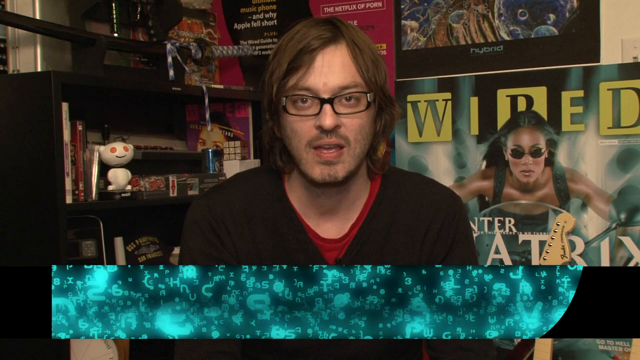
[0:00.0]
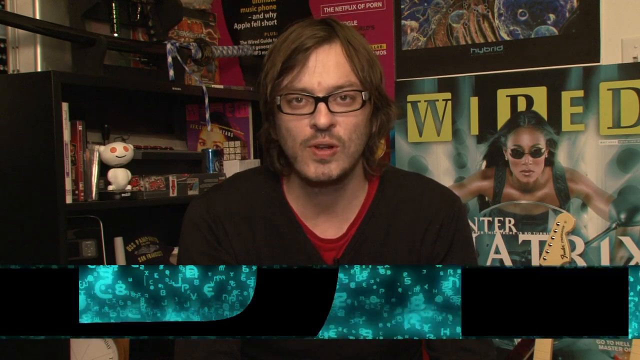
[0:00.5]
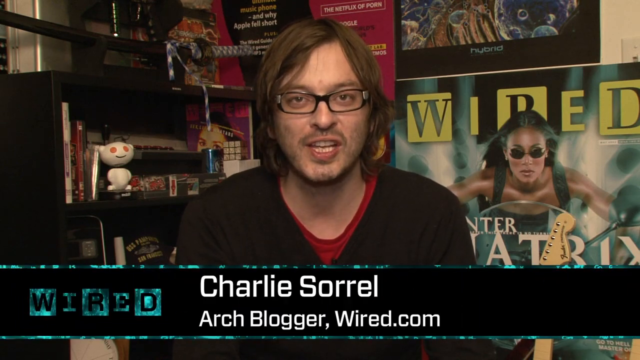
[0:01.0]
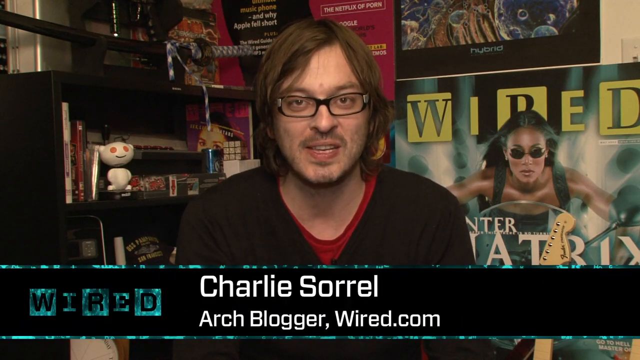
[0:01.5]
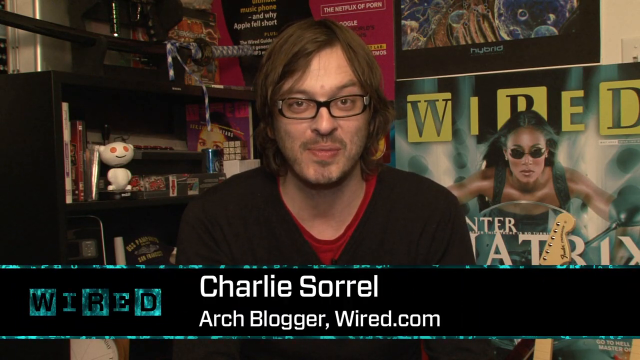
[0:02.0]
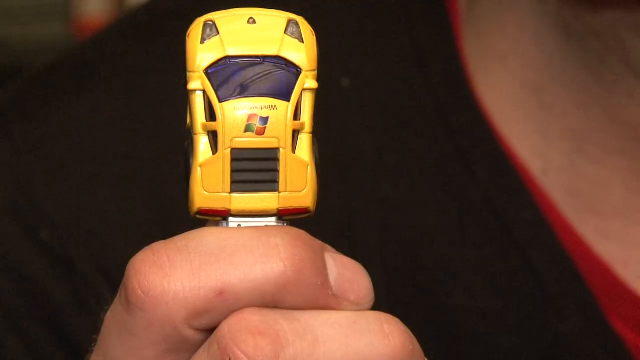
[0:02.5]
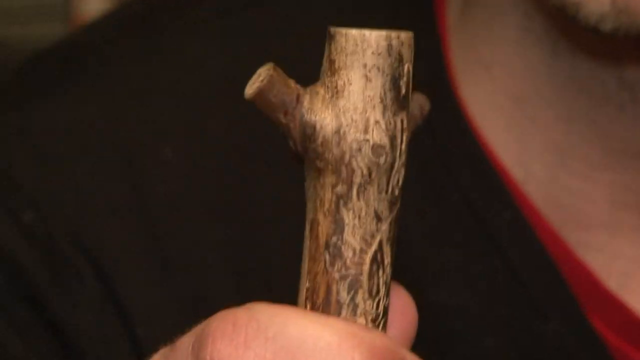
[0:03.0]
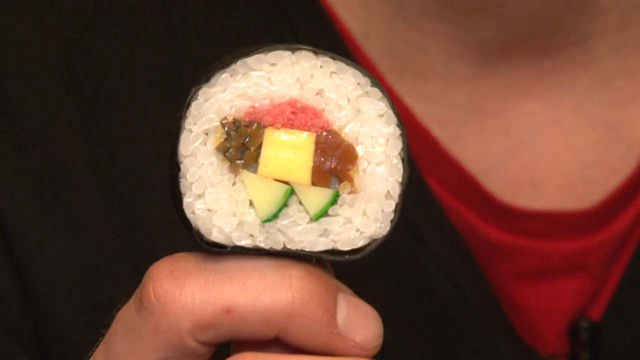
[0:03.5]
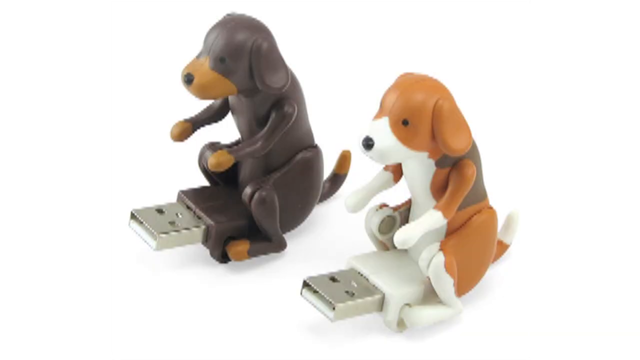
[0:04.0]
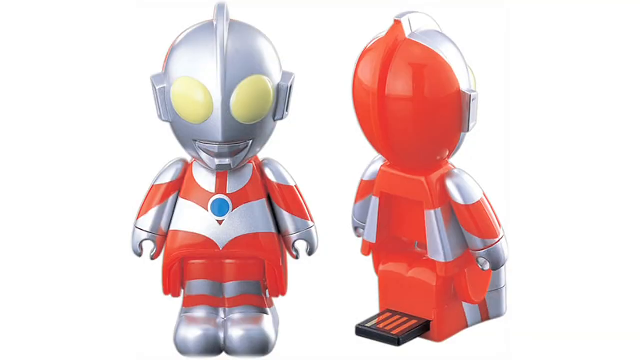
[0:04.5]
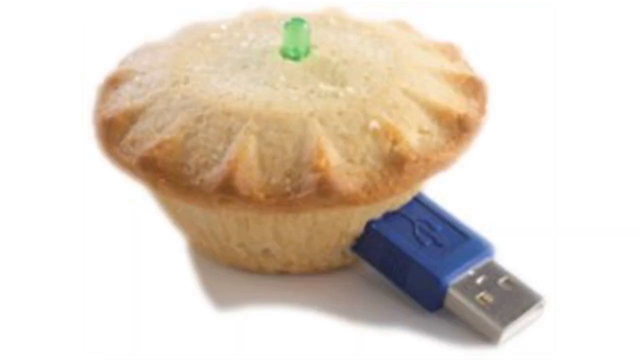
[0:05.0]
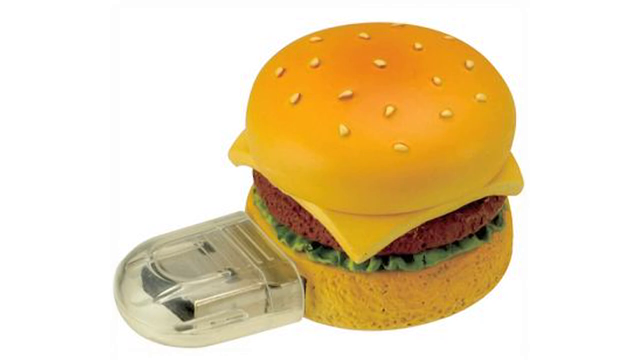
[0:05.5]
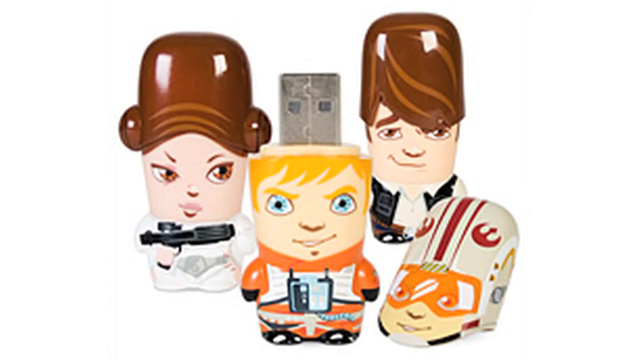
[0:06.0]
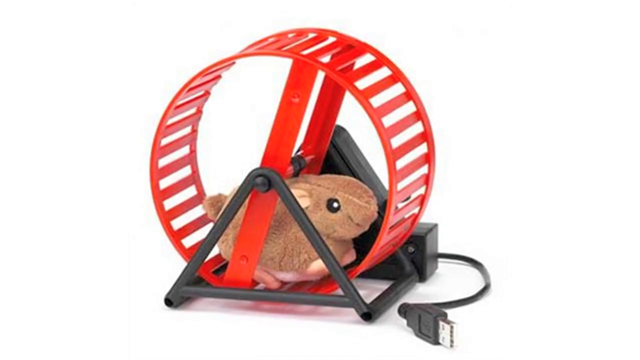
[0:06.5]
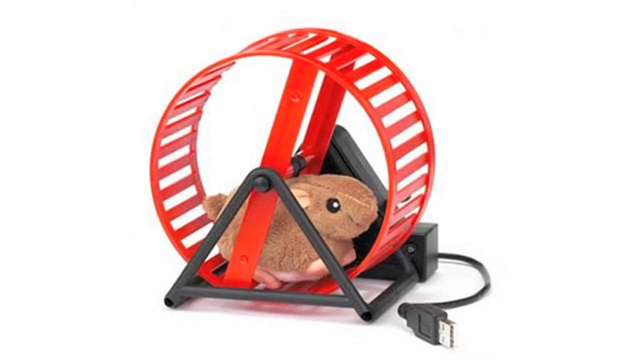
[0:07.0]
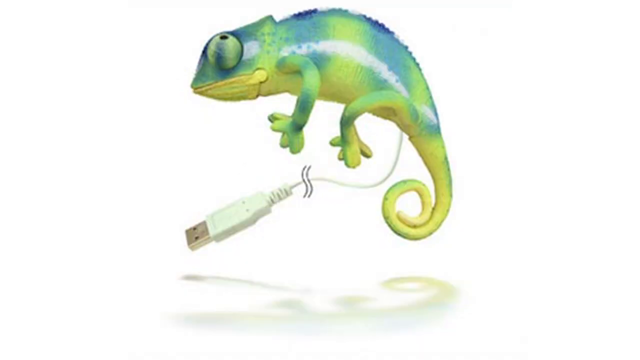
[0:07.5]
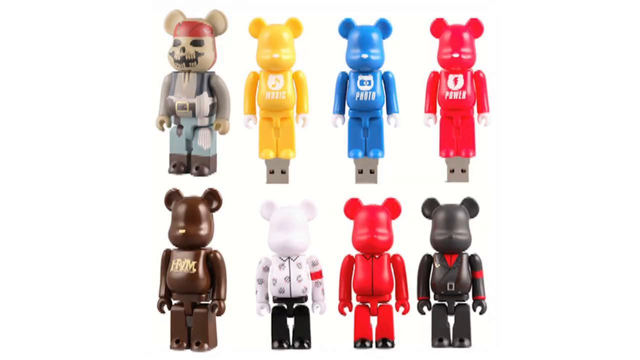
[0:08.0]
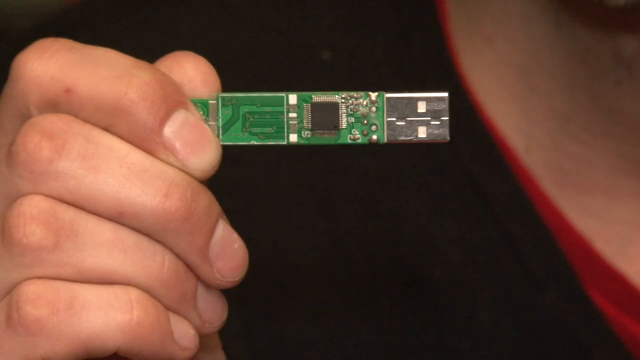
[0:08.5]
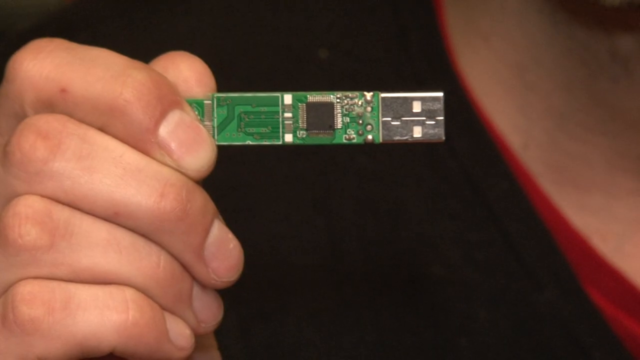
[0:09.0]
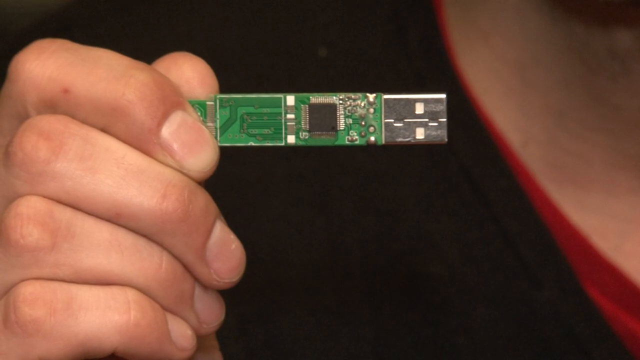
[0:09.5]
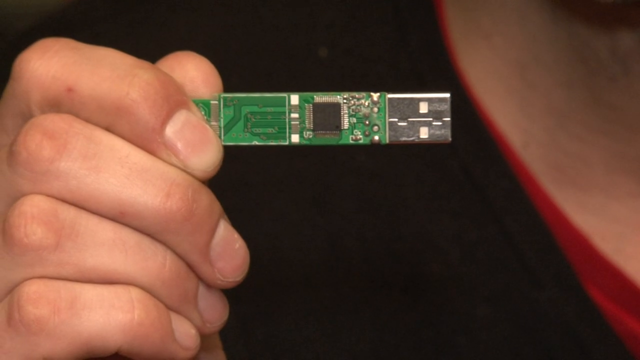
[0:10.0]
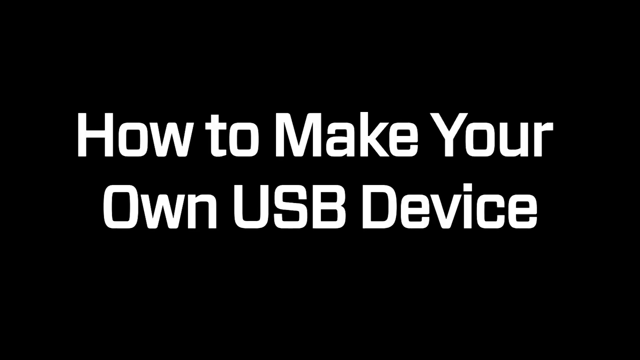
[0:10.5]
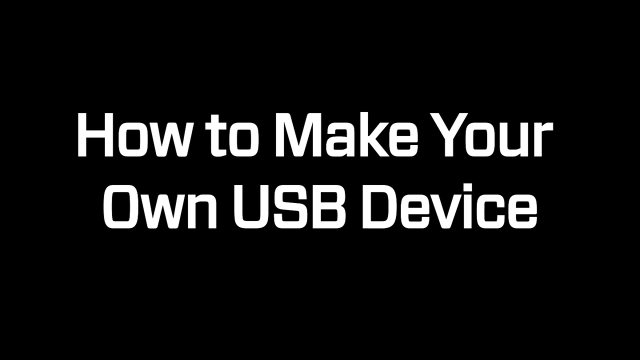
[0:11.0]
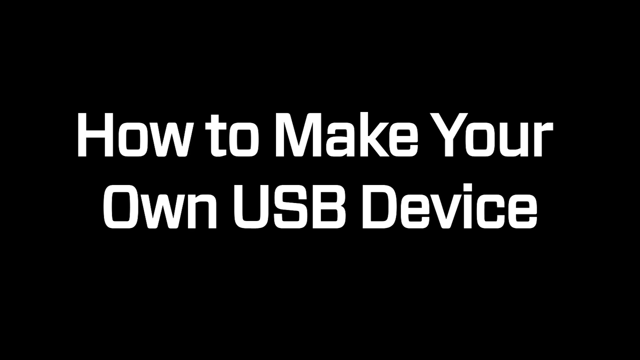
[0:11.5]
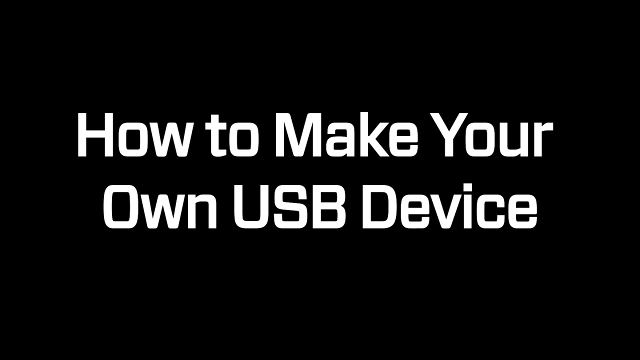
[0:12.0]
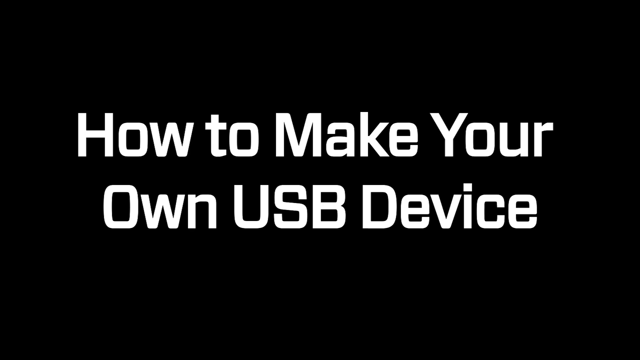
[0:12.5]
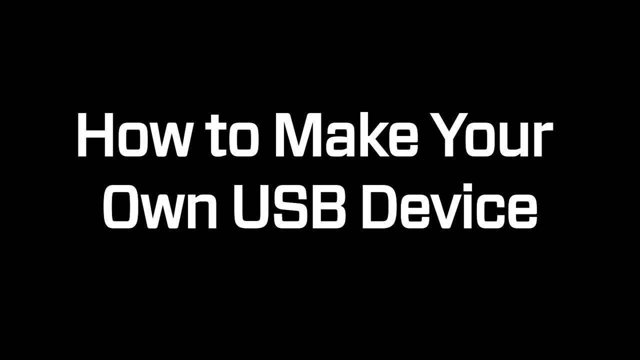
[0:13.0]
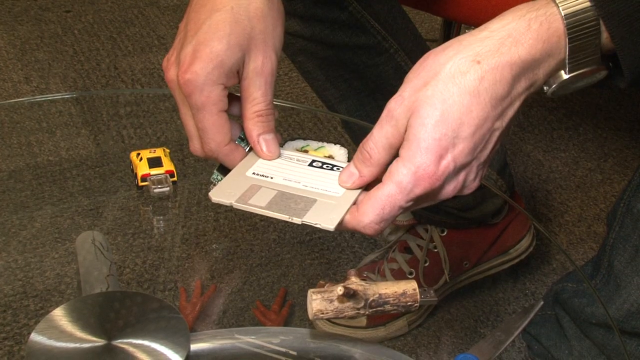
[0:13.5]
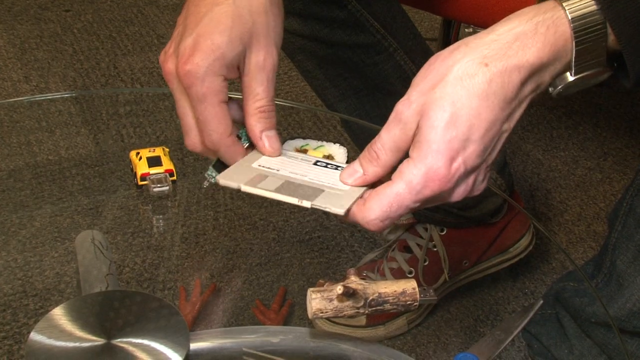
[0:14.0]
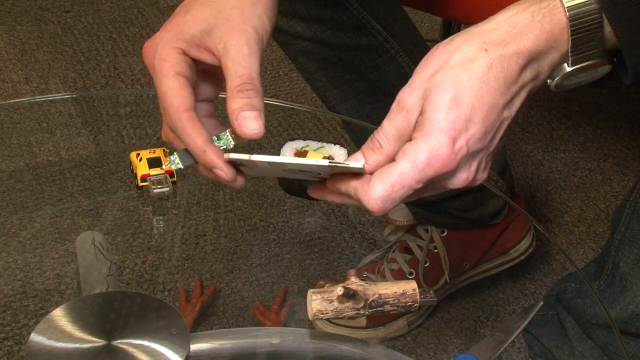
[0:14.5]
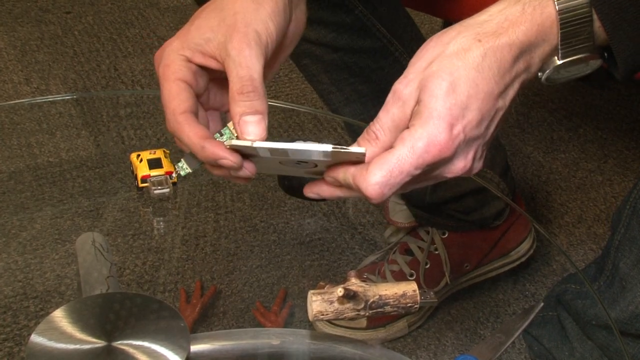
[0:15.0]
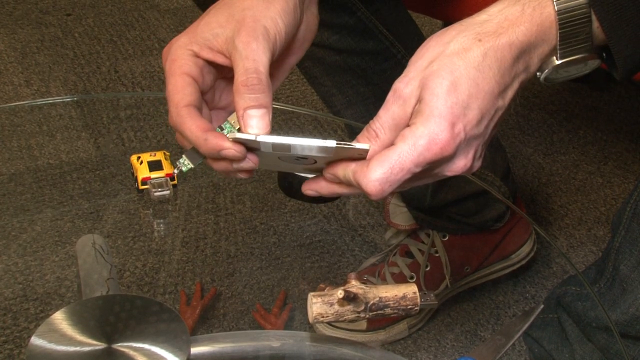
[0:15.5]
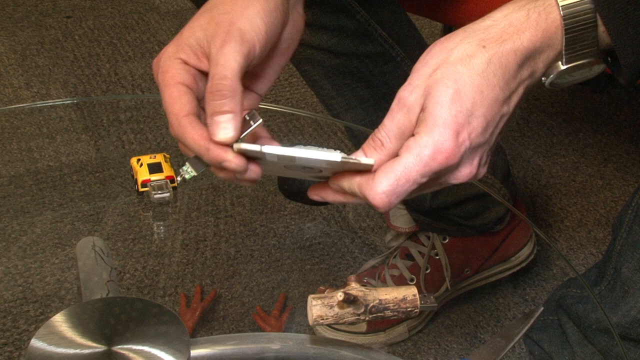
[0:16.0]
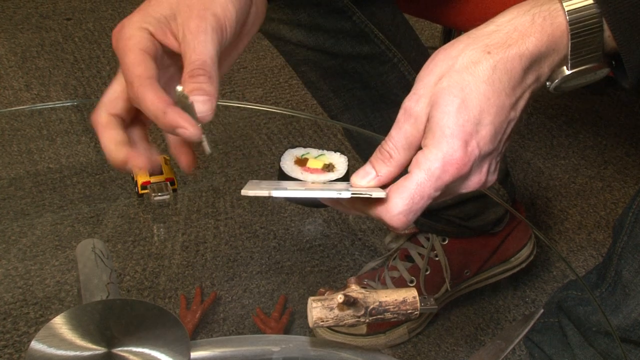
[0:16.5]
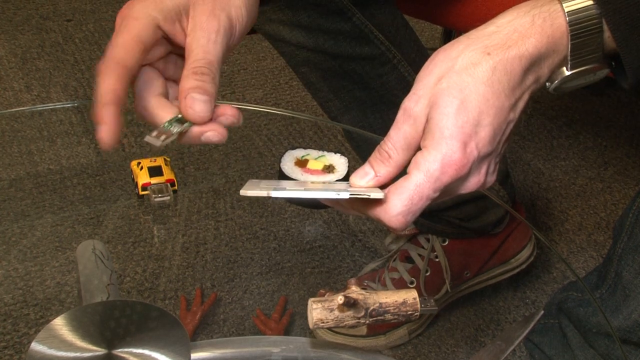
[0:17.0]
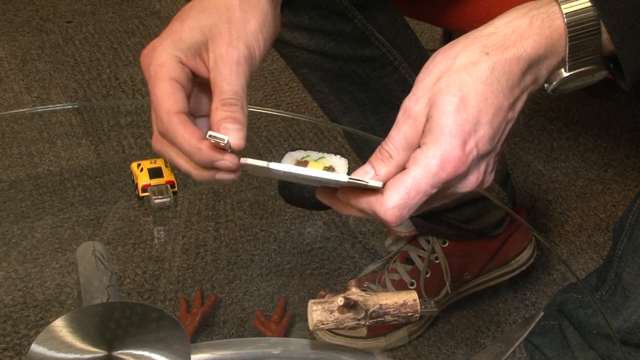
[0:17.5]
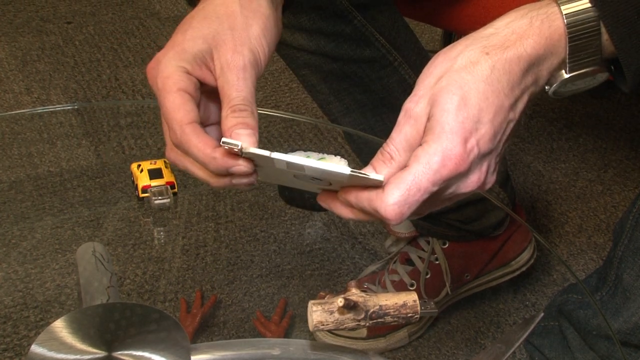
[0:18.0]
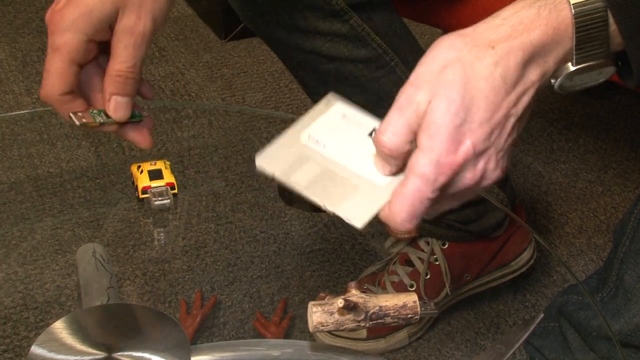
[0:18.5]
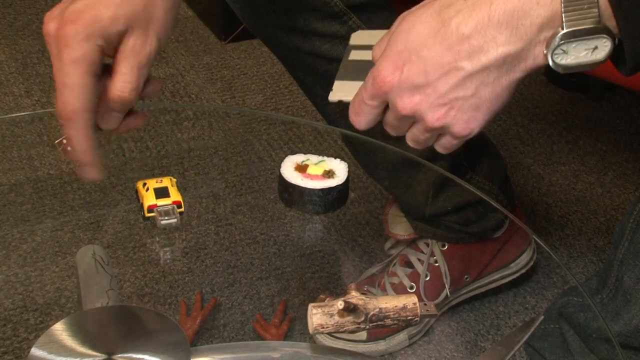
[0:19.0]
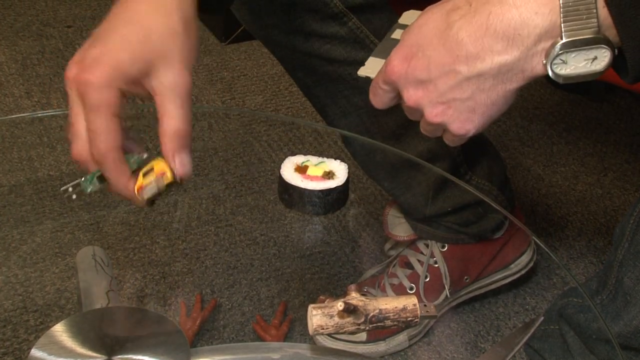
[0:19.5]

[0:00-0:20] A person shows pictures of what seem to be toys and electric devices or circuits, related to making your own USB device. The thumbnail shows a headline about how to make your own USB pouch.